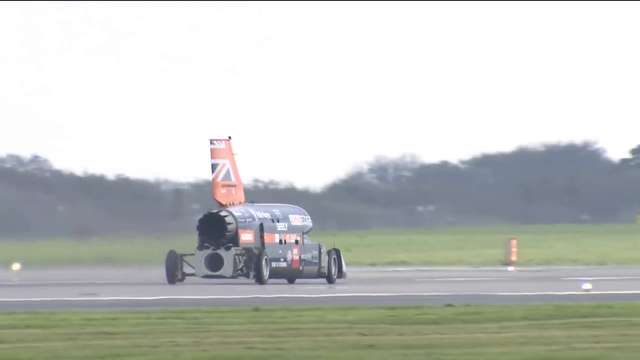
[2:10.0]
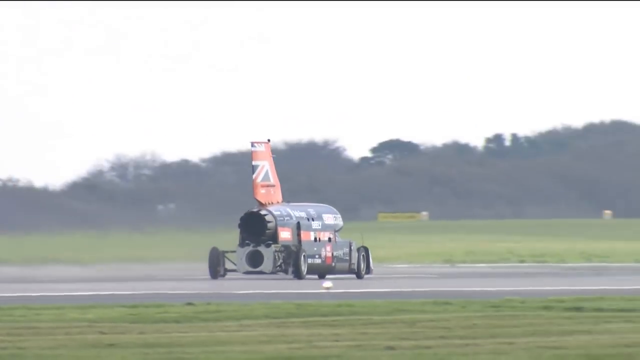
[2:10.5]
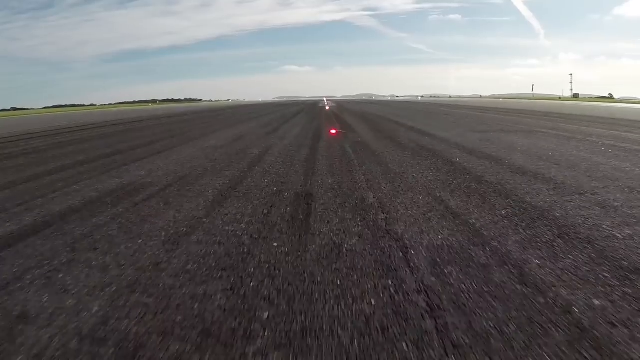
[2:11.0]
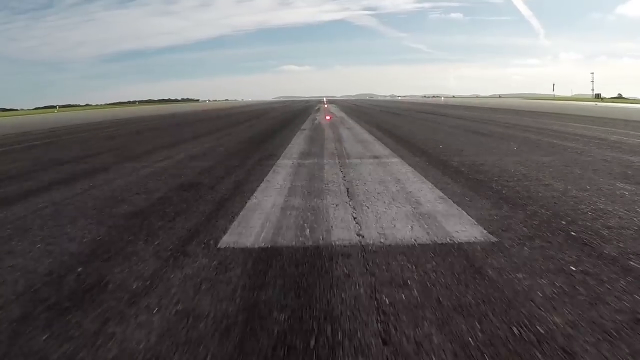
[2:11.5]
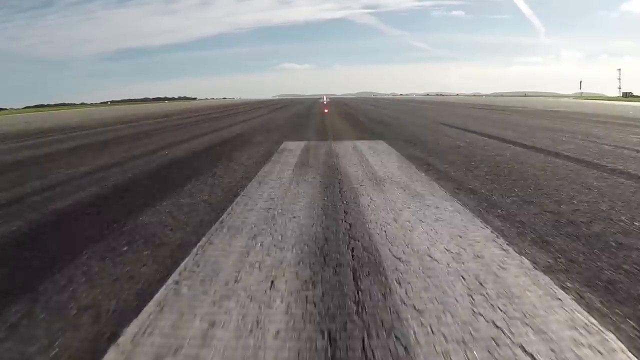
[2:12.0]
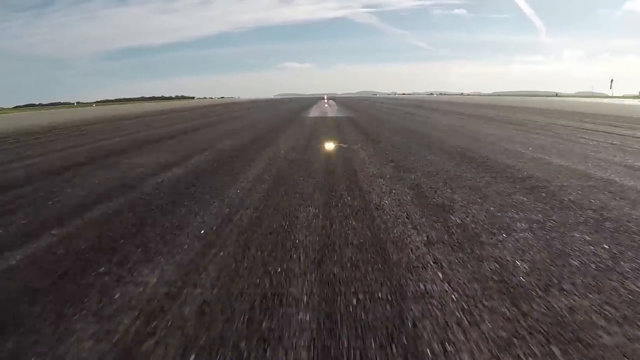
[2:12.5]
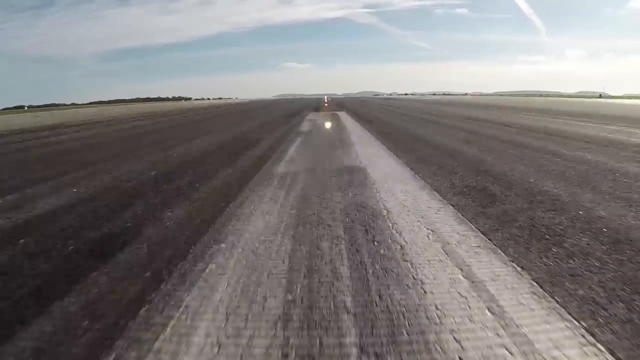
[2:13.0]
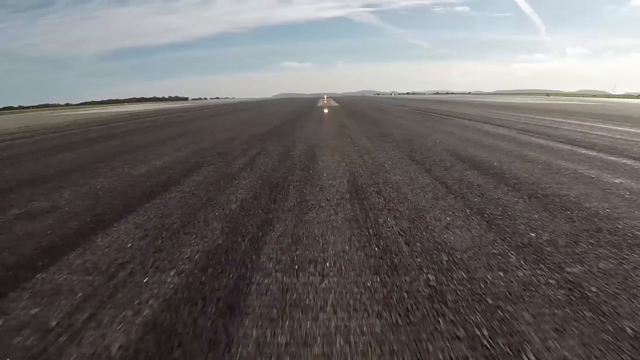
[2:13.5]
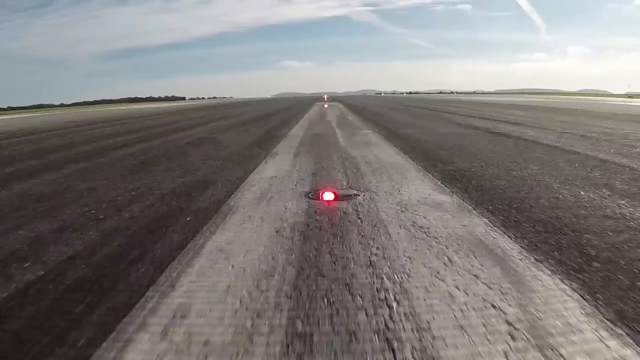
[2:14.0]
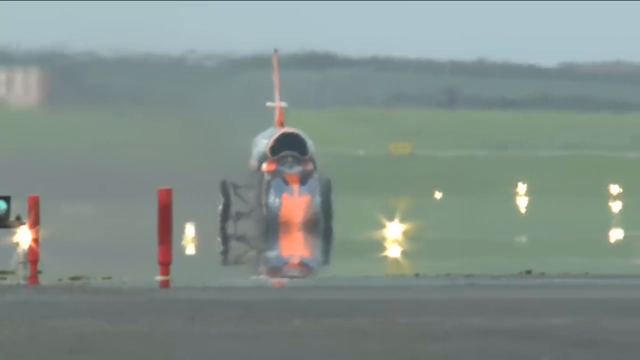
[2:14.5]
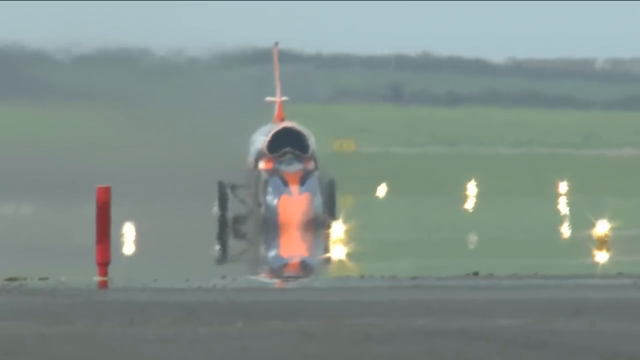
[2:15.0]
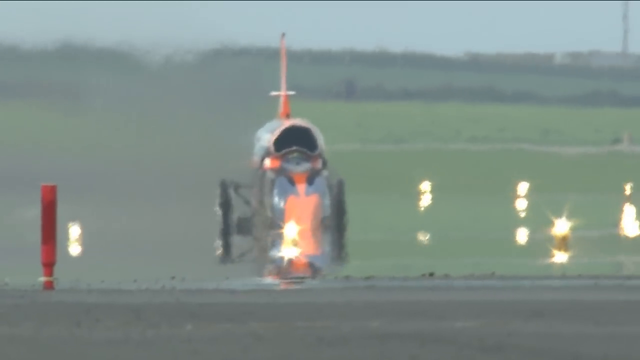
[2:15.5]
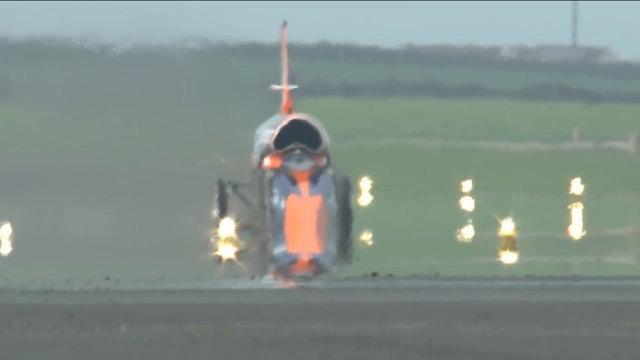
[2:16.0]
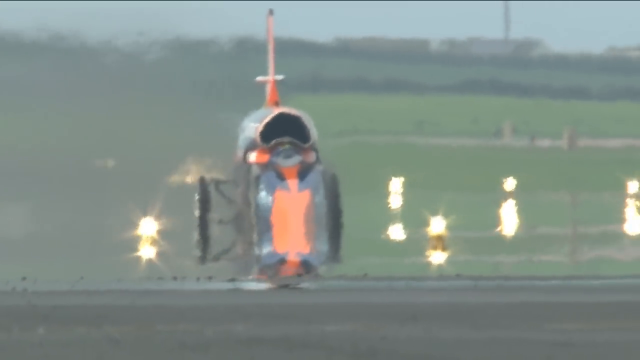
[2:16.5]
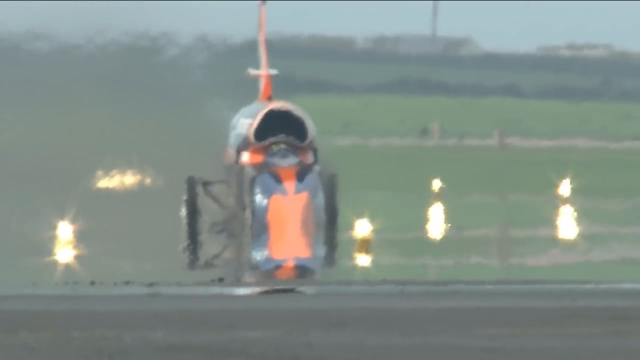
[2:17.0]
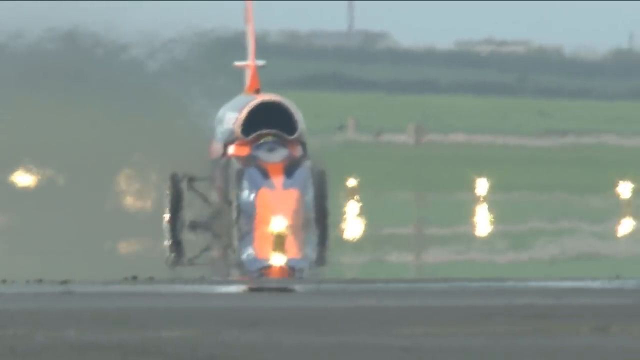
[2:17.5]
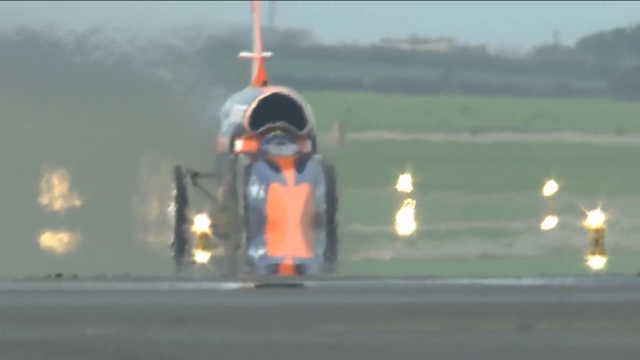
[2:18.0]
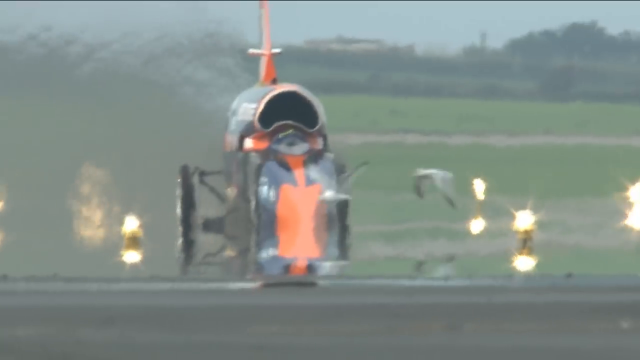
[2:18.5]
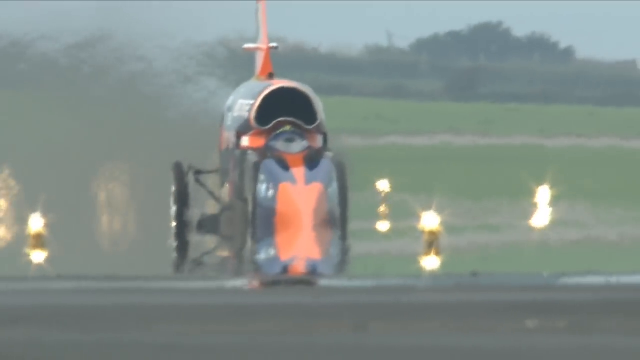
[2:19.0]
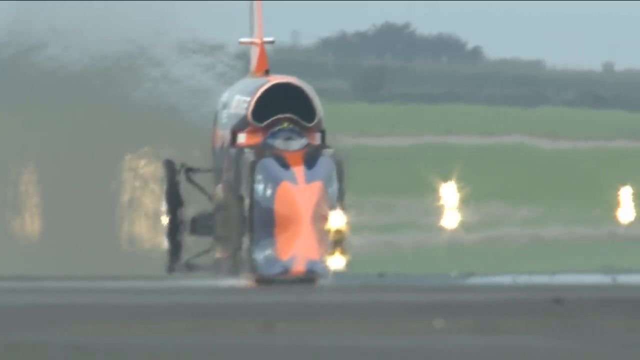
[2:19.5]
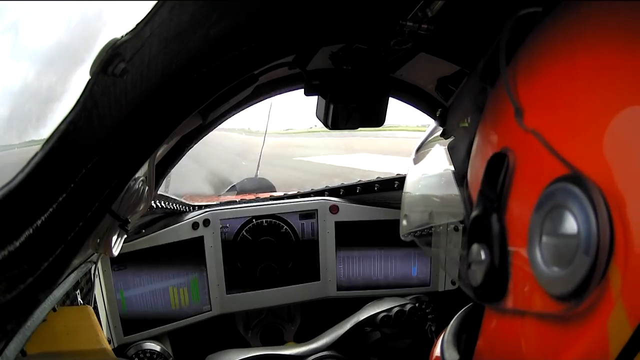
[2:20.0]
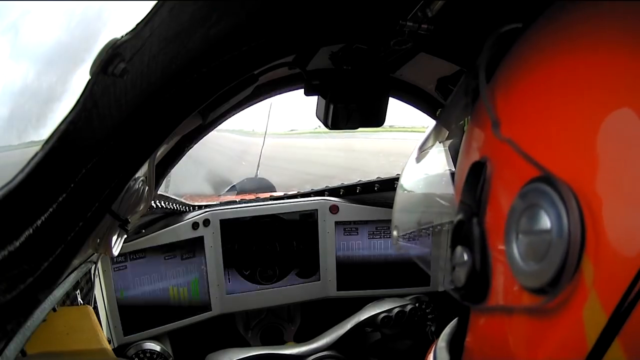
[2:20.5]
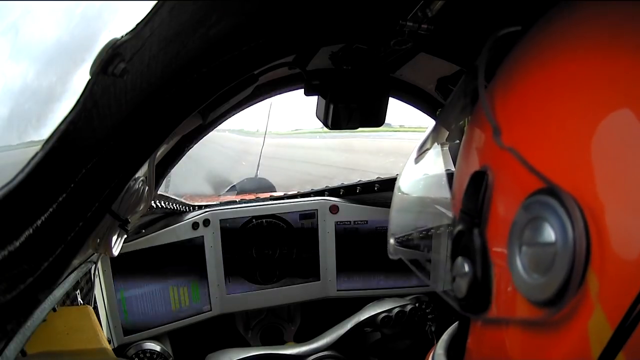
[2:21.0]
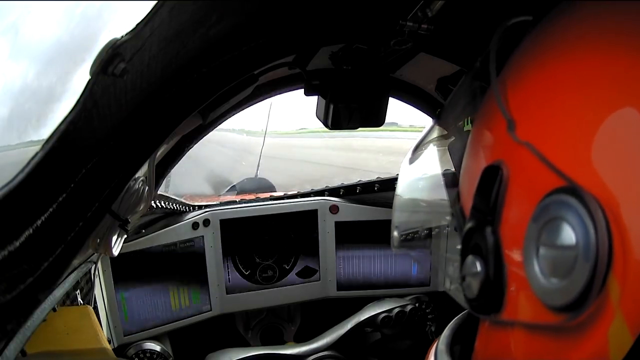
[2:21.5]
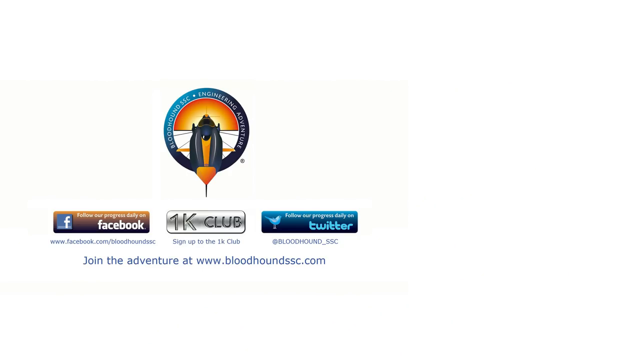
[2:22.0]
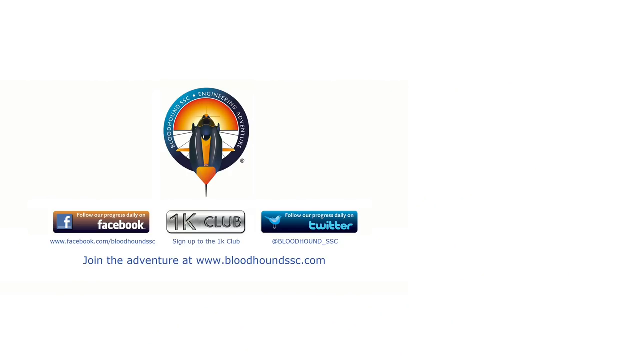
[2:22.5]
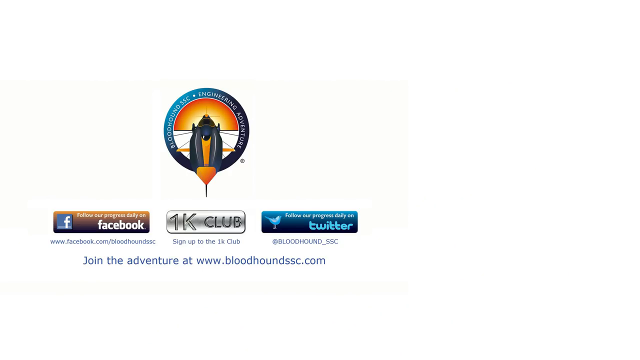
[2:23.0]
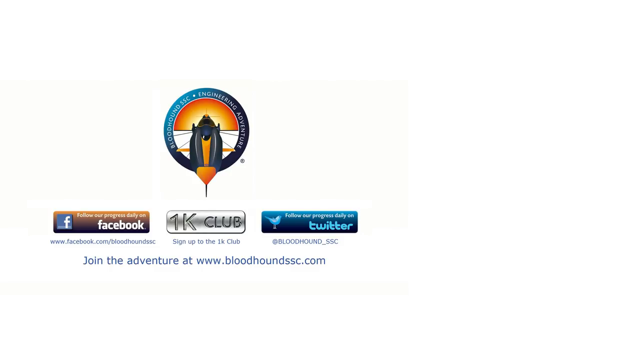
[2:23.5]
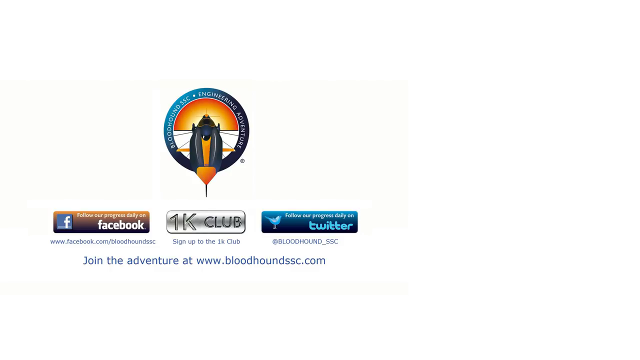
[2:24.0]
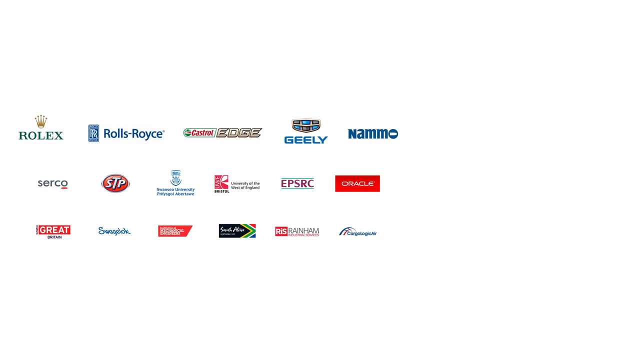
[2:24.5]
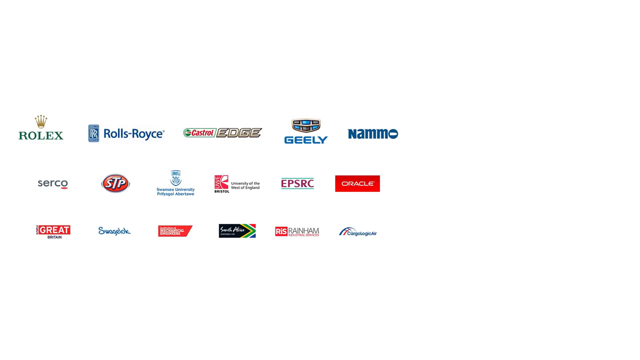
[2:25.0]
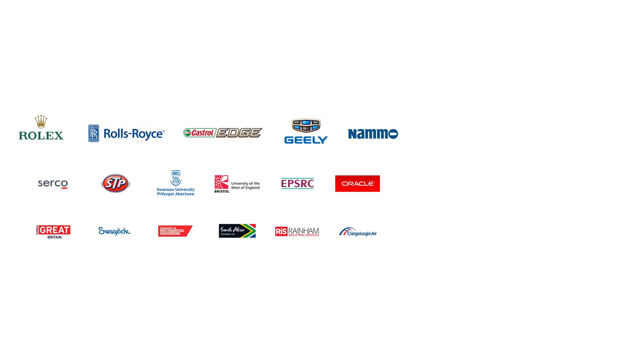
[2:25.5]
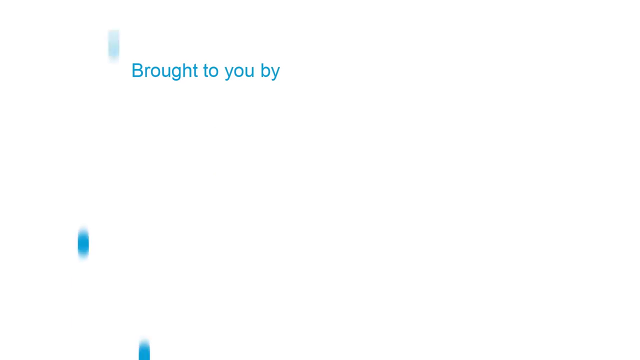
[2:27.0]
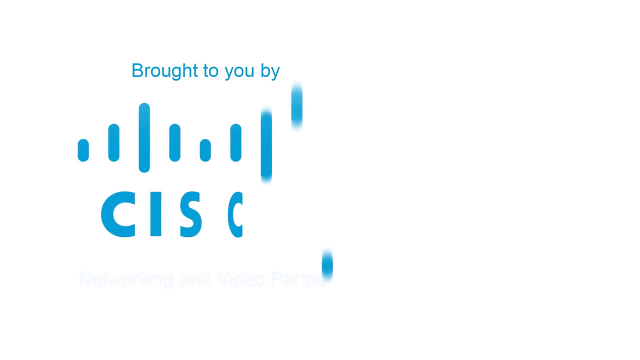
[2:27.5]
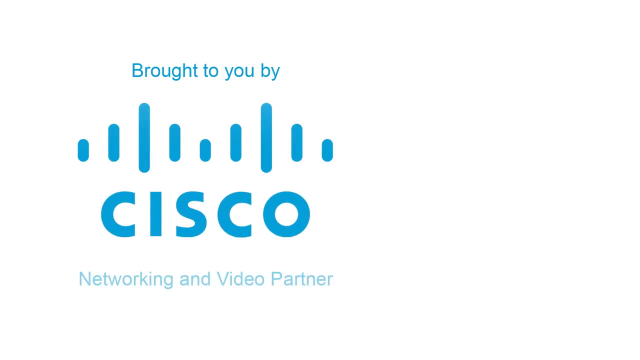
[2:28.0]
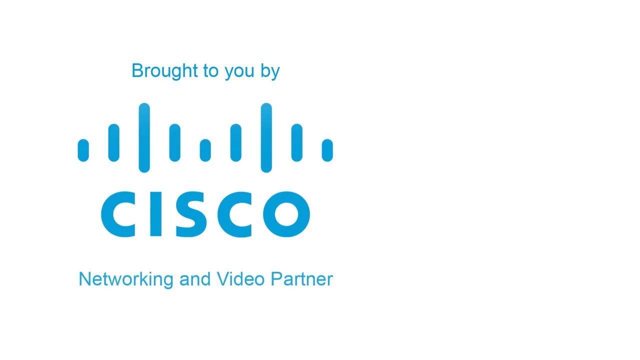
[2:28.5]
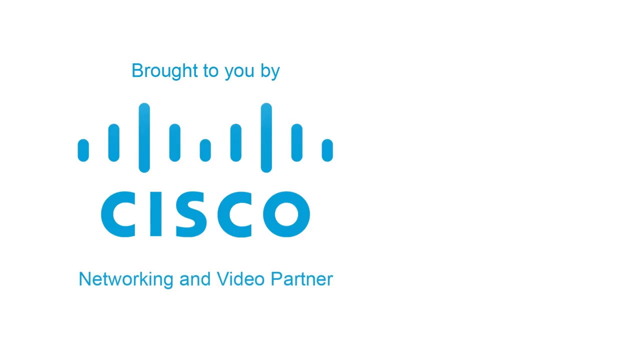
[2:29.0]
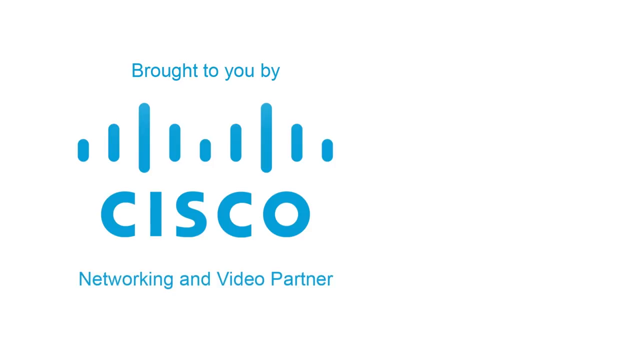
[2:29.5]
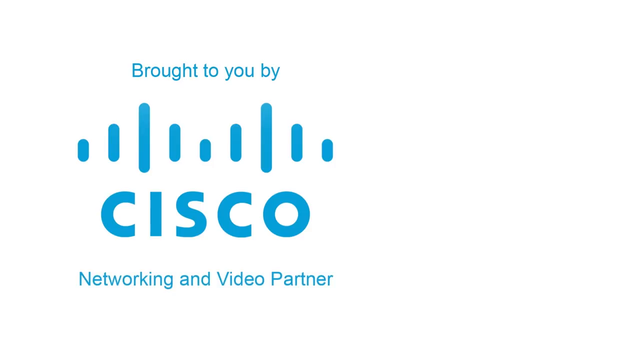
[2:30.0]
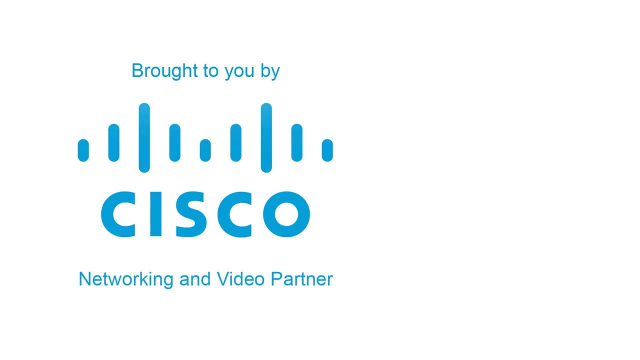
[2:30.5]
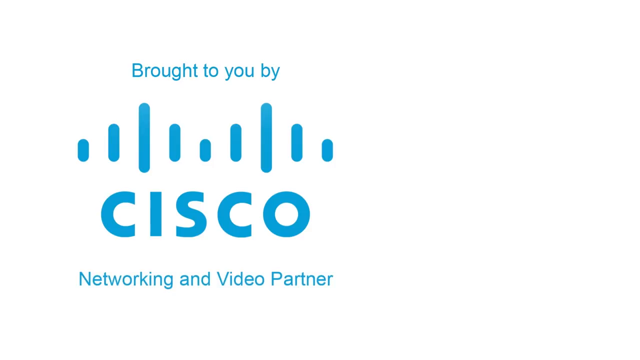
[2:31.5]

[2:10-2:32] The rocket car races down a strip in broad daylight. A cut shows just the racing strip, probably the view in front of the driver, rushing toward him very fast as he goes down the center; there are dashed lines, somewhat like a highway's, and he is lined up to go directly down the line. The view cuts back to a frontal view of the rocket car, then to the inside of the car, where the driver wears an orange helmet with a clear face shield. Looking down the front, displays in front of the driver show images moving very fast. Logos follow: a Facebook logo, then a screen with more logos, including Rolex, Rolls-Royce, Healey, Namo, STP, Oracle and several other companies. The final screen says "brought to you by Cisco Networking and Video Partner."